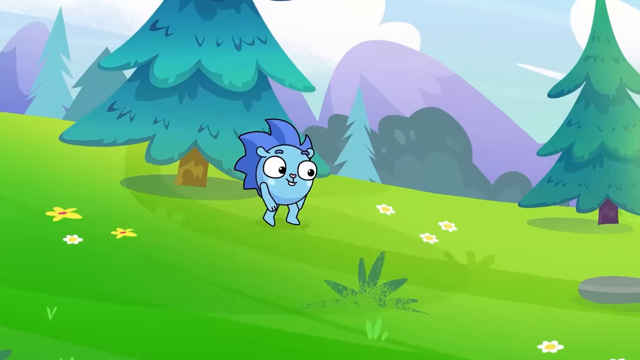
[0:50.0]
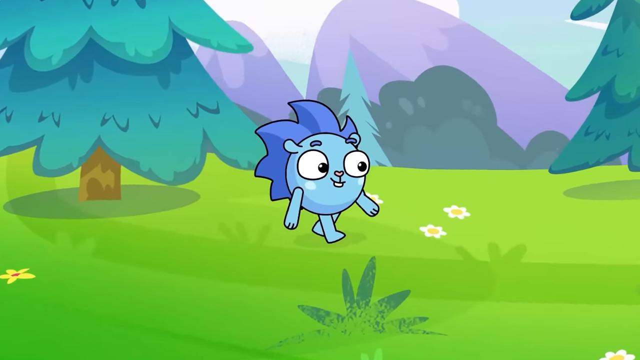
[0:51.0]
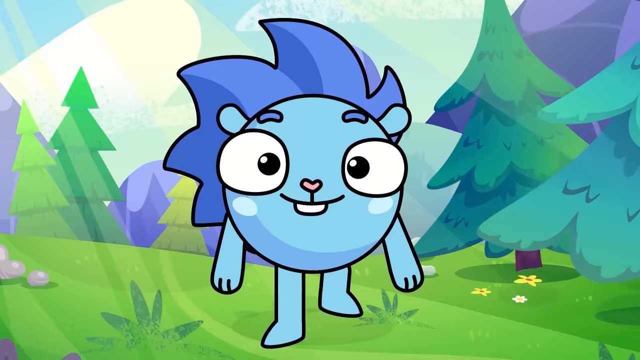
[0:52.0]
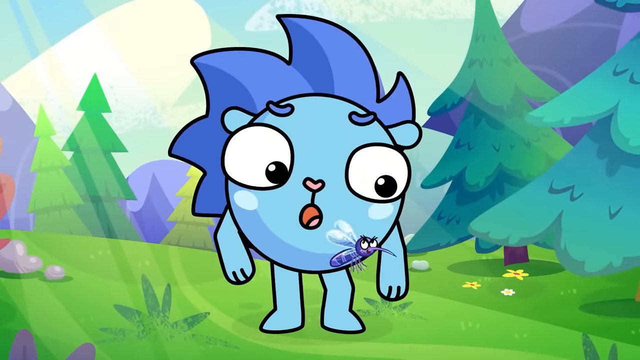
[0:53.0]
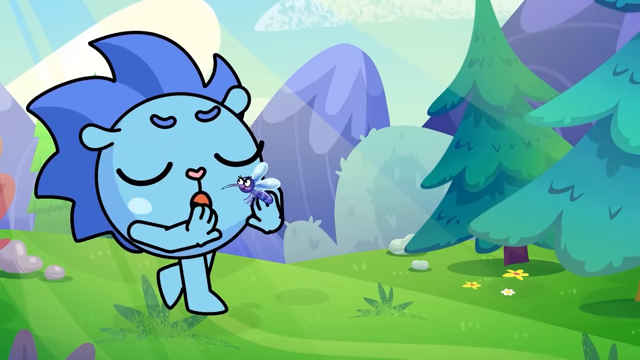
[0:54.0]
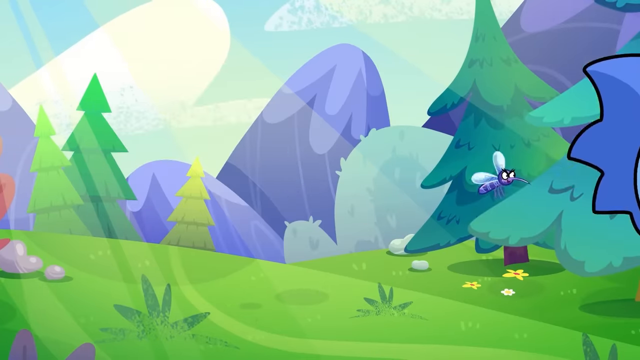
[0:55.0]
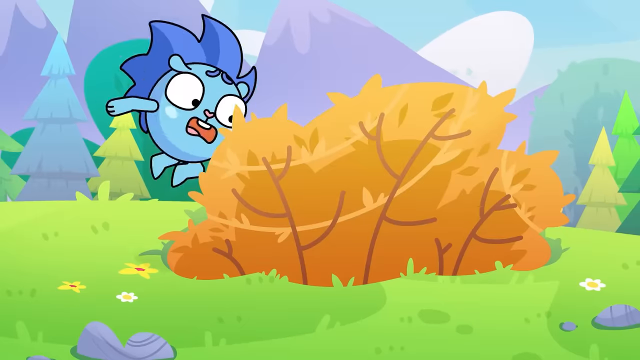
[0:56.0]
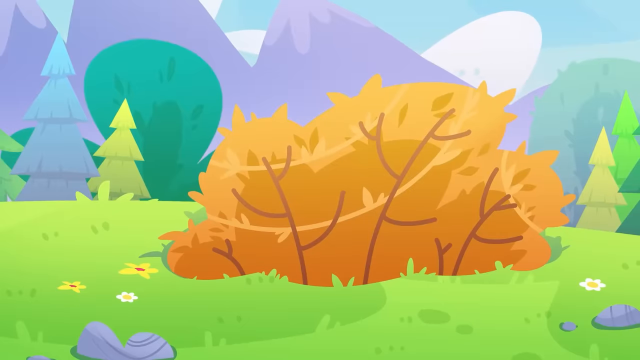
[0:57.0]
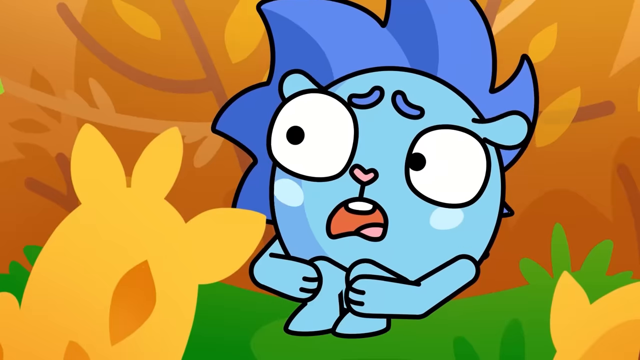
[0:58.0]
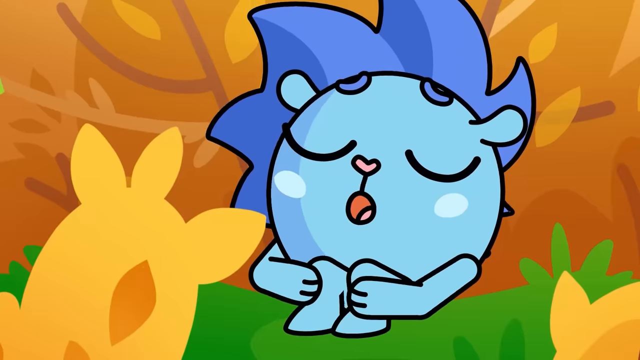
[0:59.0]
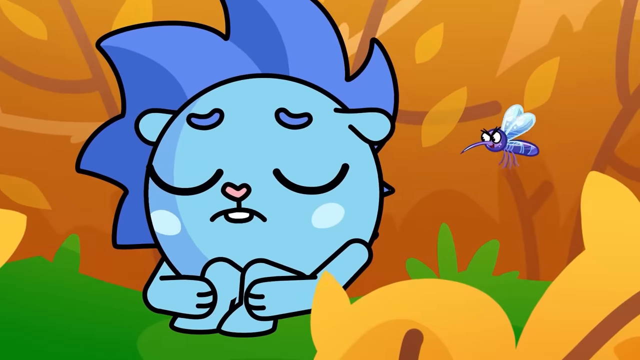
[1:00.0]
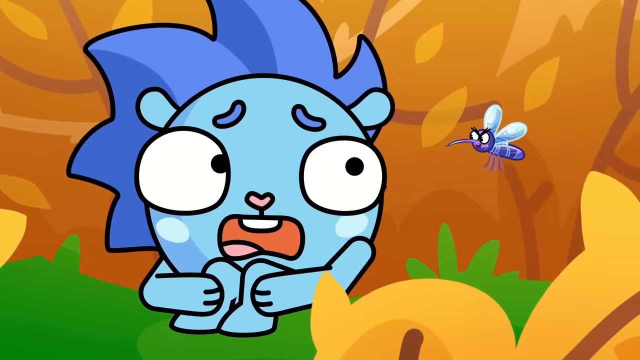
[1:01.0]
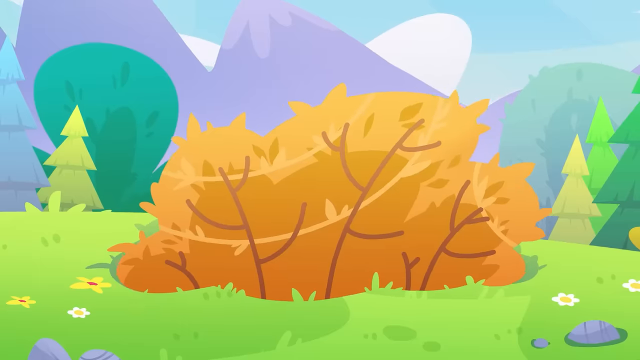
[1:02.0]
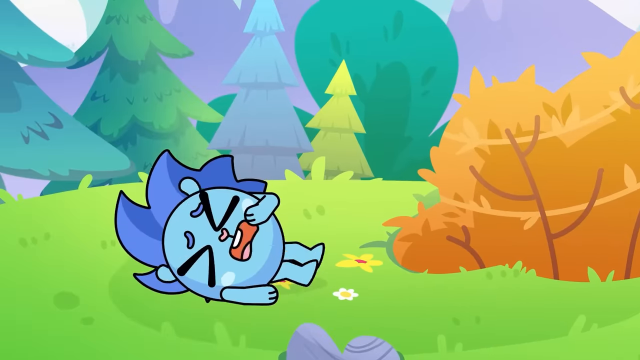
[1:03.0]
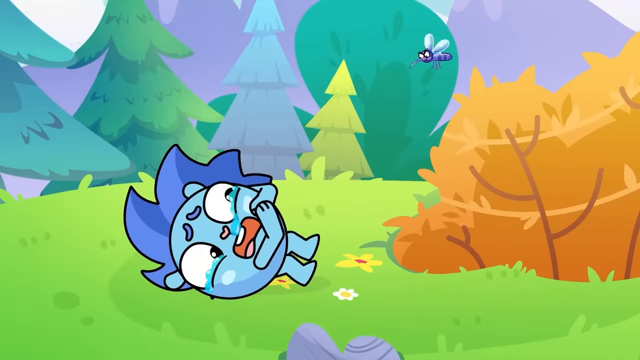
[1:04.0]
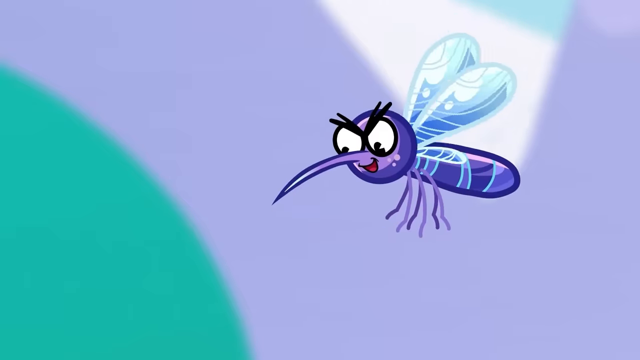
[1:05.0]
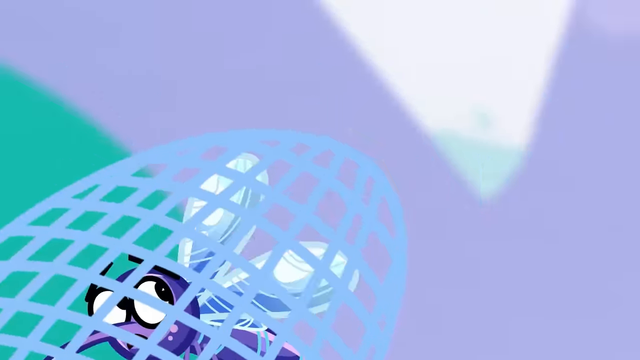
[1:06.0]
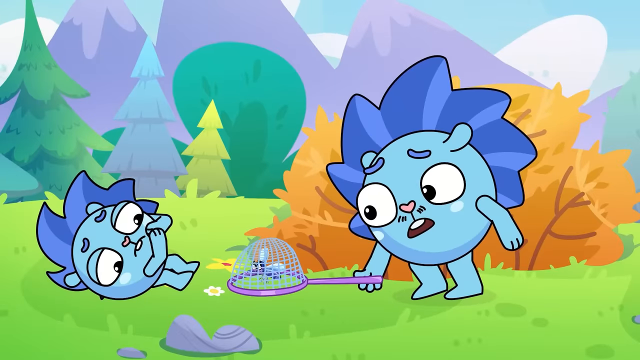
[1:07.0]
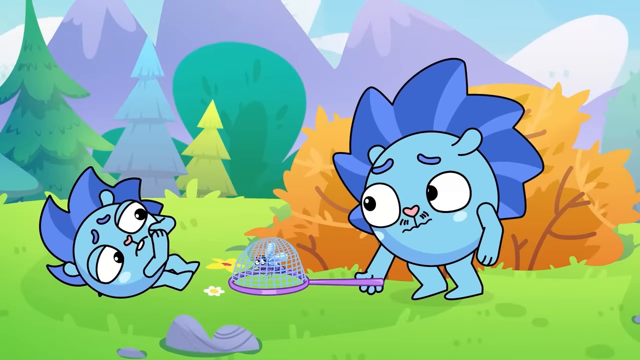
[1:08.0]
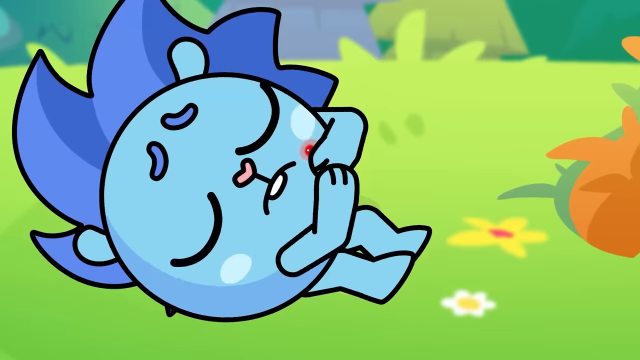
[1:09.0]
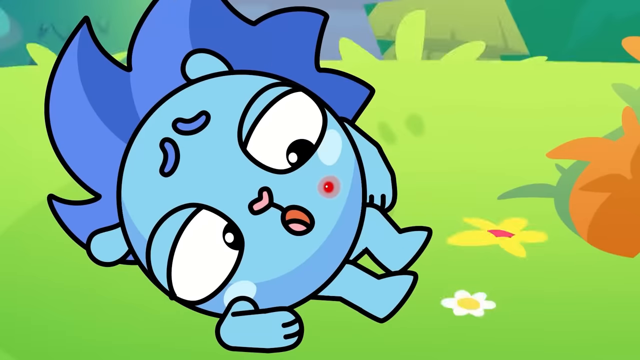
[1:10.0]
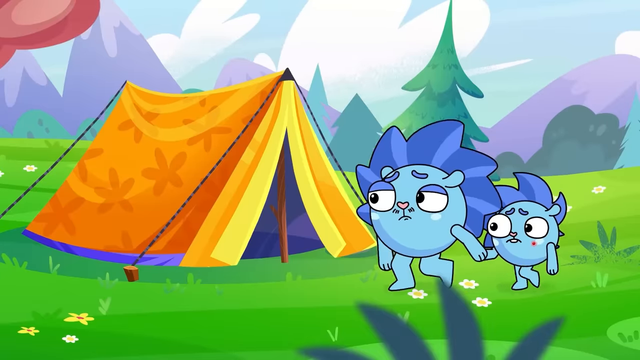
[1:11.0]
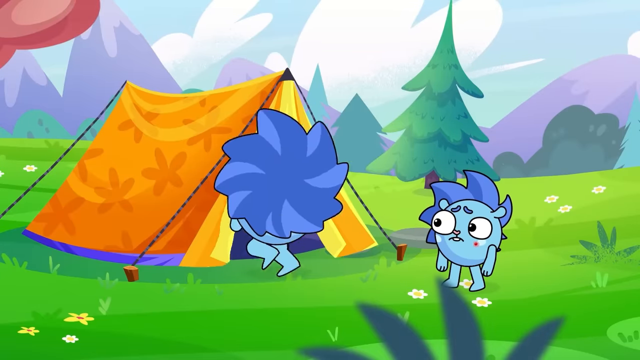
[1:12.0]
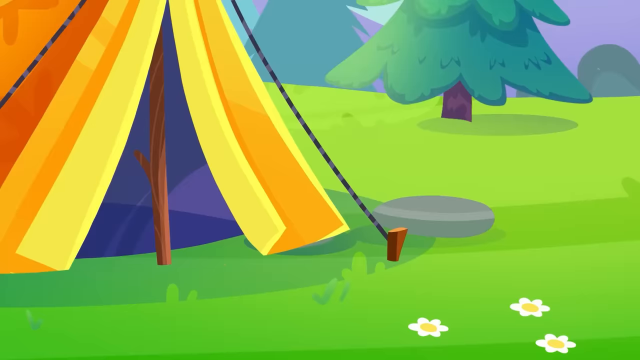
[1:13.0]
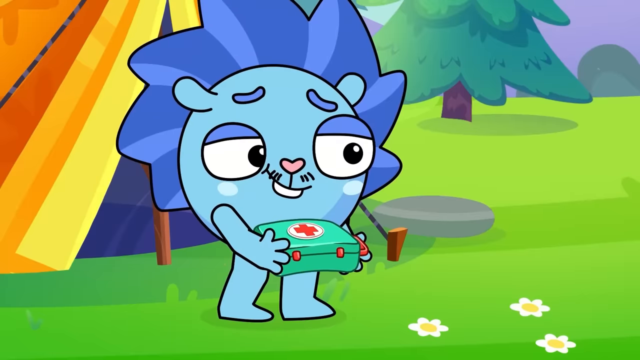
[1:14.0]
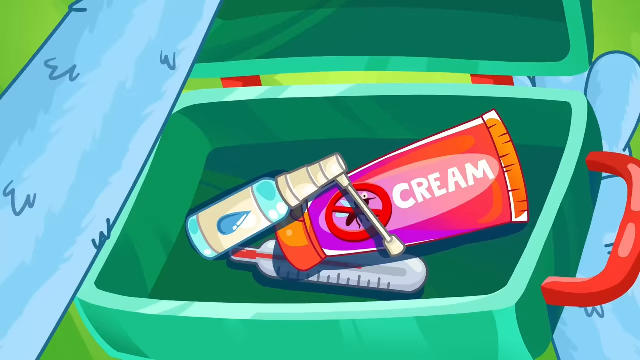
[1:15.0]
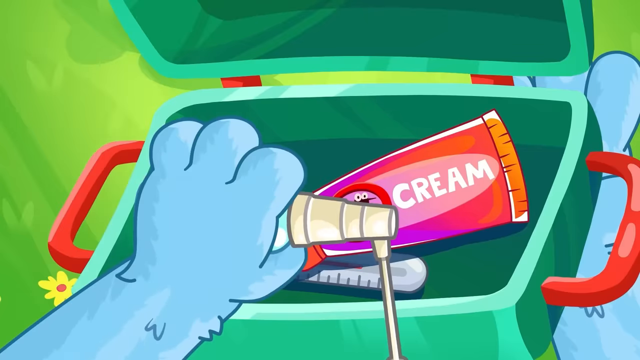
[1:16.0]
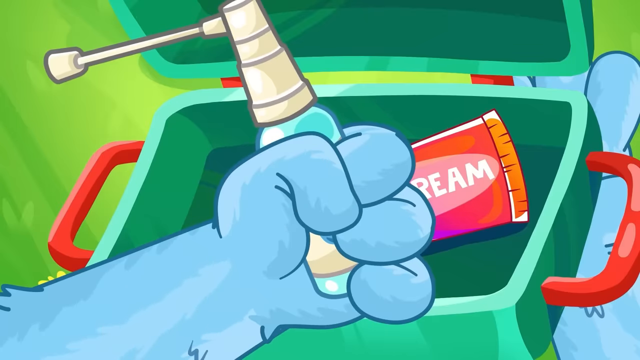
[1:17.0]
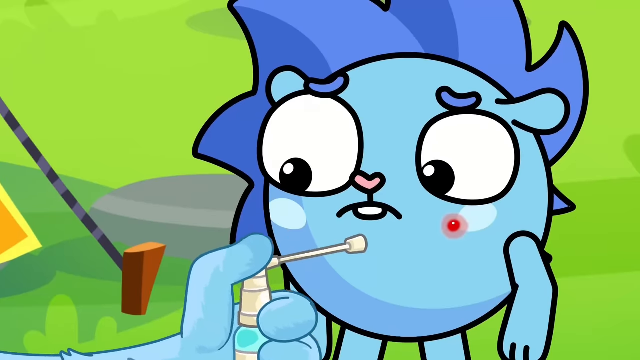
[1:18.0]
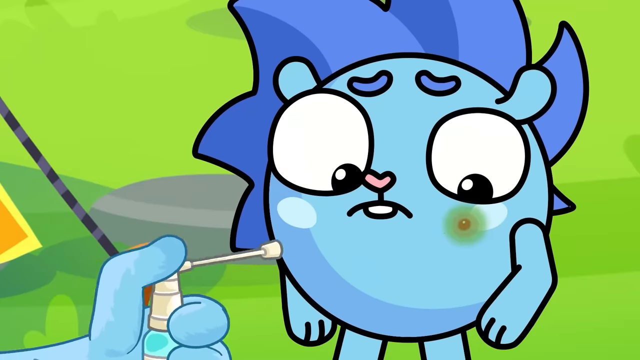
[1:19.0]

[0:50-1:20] The little blue creature looks happy, kind of walking through a meadow. There is a tree with green leaves, white flowers, or perhaps yellow flowers with white petals, and a plant. The creature then looks surprised with its mouth open as the mosquito, with little wings on its back, appears in front of him. There is a field of grass with yellow flowers that have a red dot in the center, a blue sky, large rocky mountains with caps on top, and clouds. The creature runs away into an orange bush, which shakes, and seems surprised to be found again by the mosquito. He jumps out and cries, and is about to be attacked before his dad catches the mosquito. Then there are medical supplies, something green and some kind of gas.